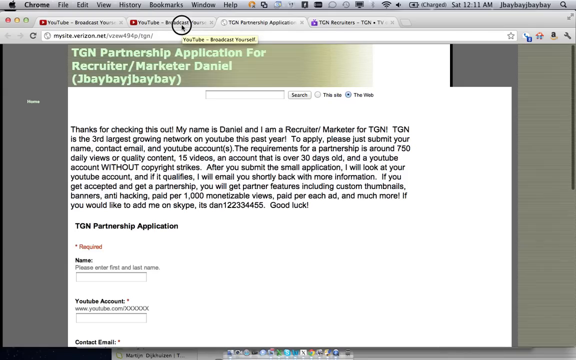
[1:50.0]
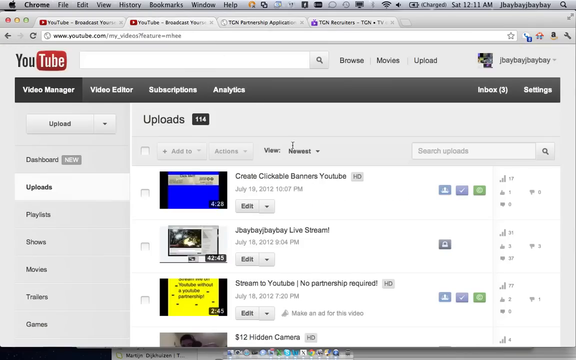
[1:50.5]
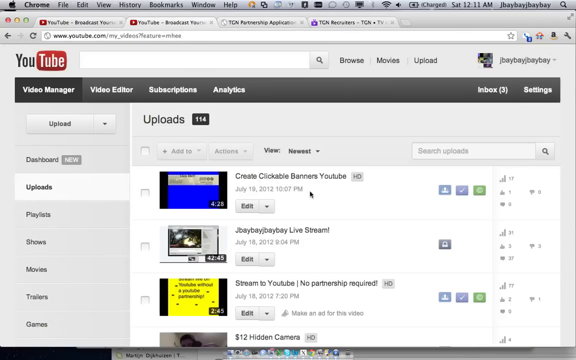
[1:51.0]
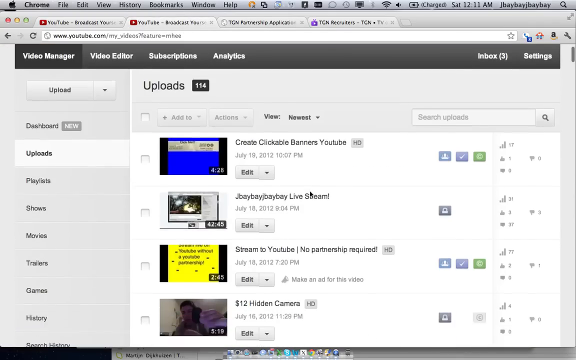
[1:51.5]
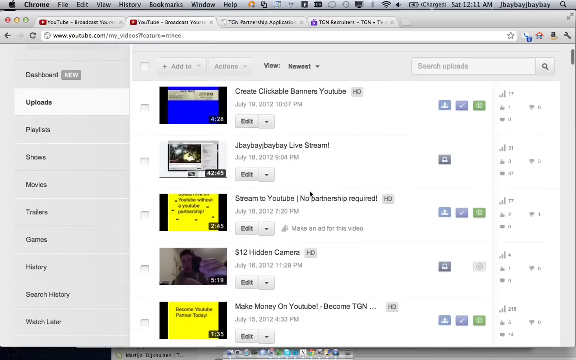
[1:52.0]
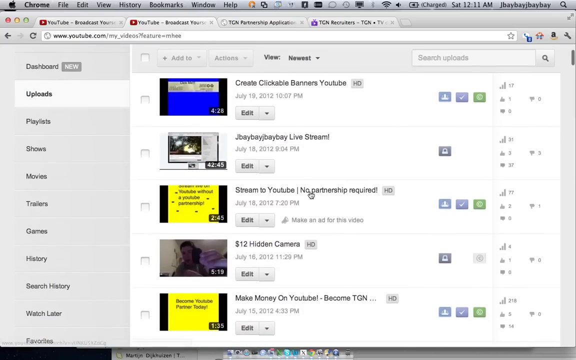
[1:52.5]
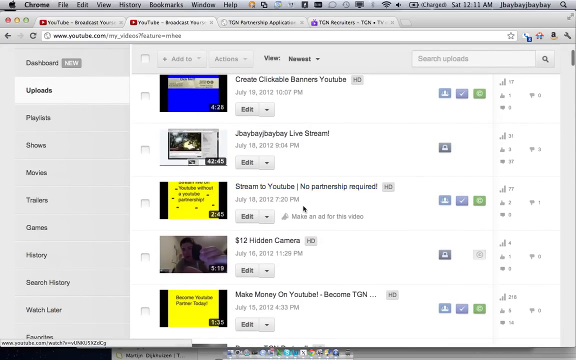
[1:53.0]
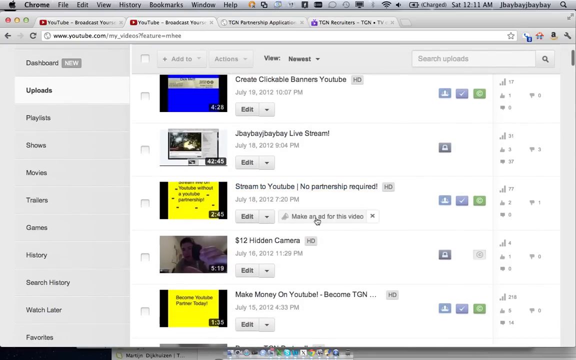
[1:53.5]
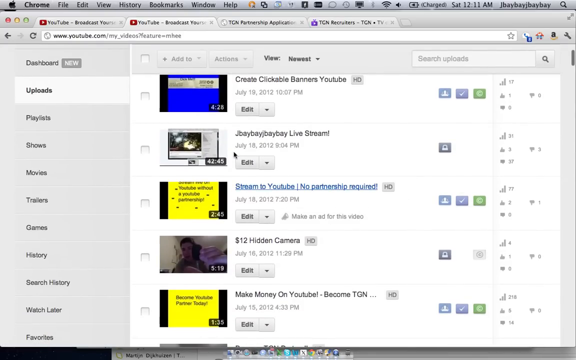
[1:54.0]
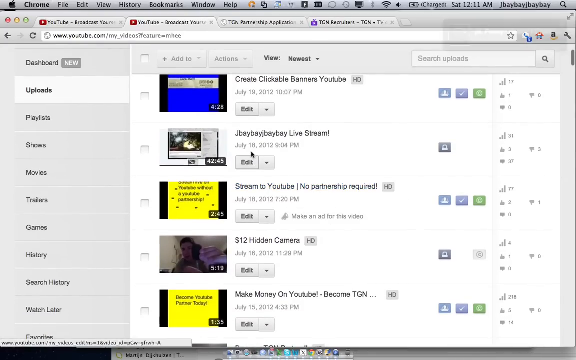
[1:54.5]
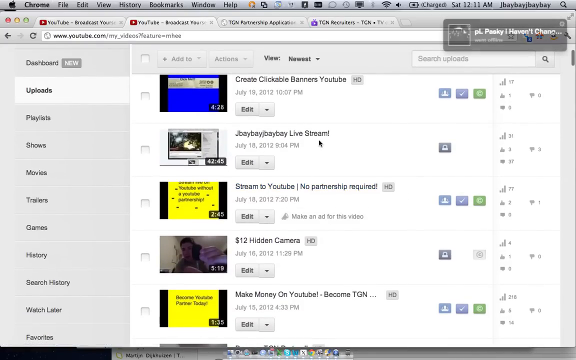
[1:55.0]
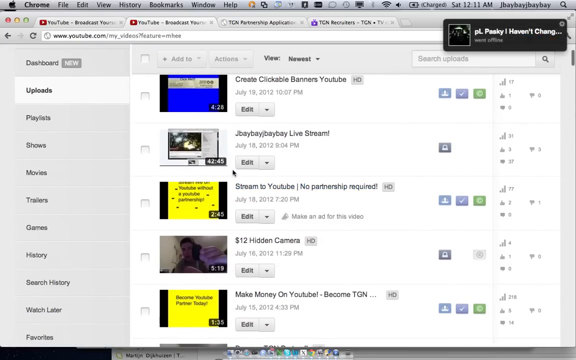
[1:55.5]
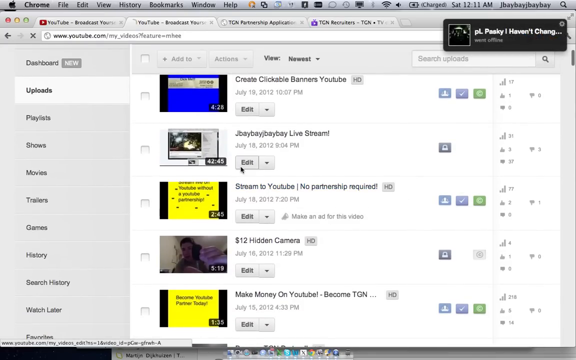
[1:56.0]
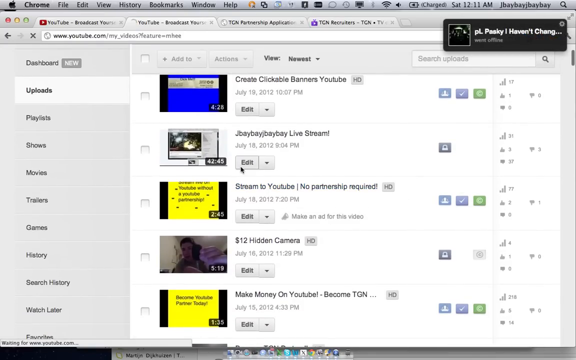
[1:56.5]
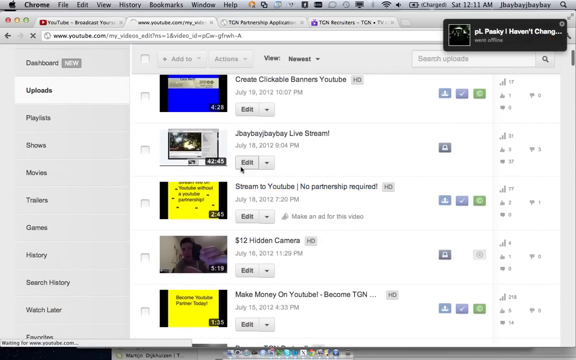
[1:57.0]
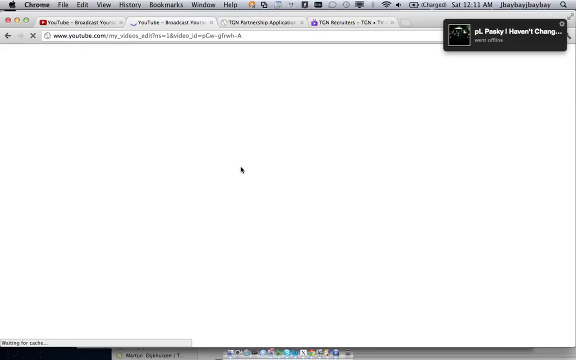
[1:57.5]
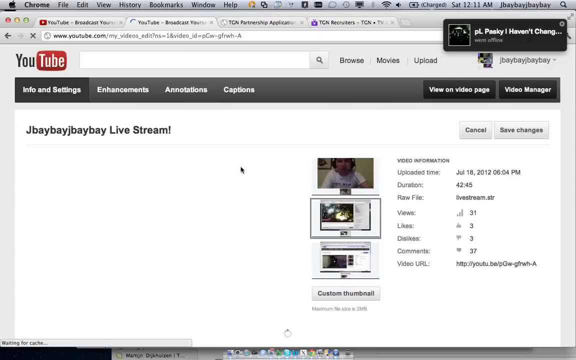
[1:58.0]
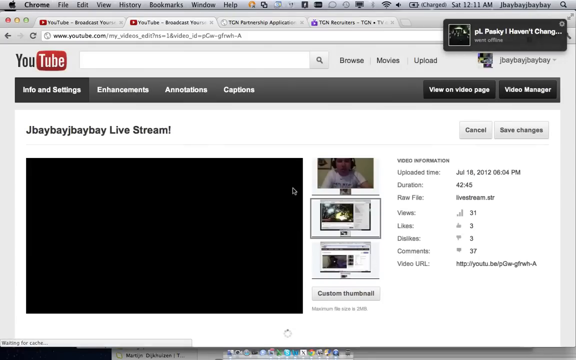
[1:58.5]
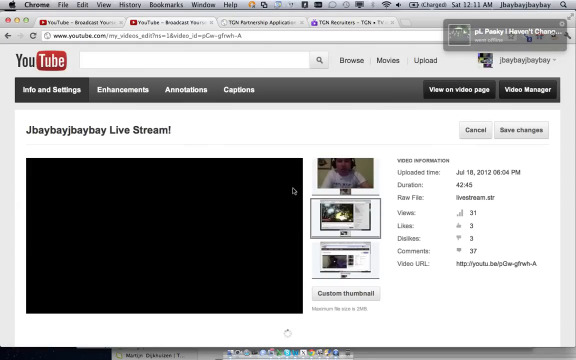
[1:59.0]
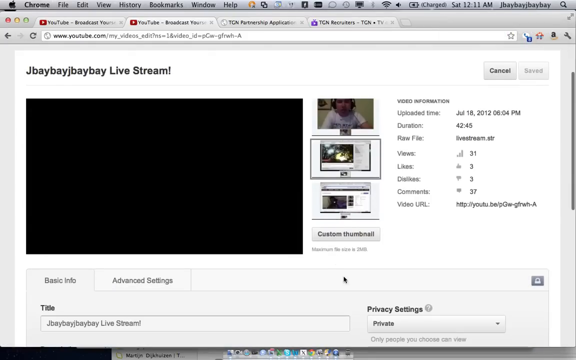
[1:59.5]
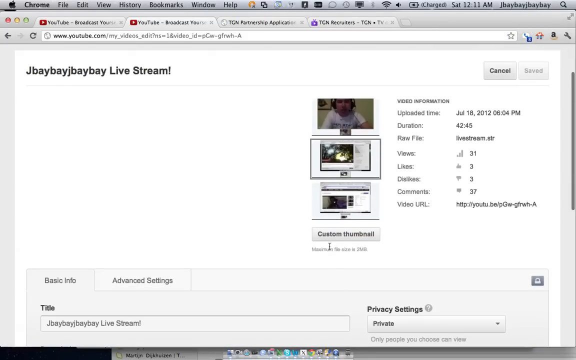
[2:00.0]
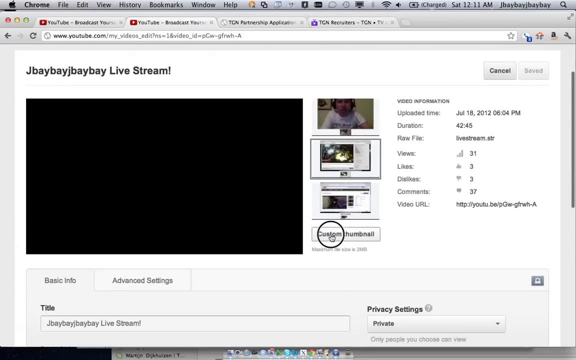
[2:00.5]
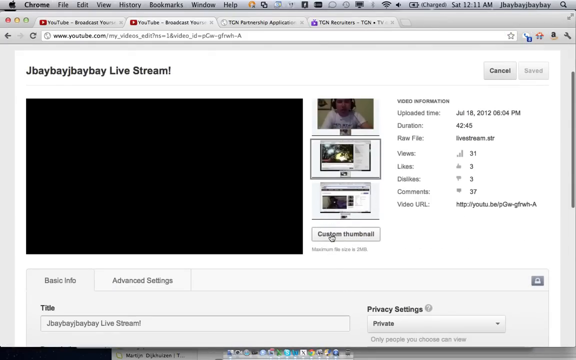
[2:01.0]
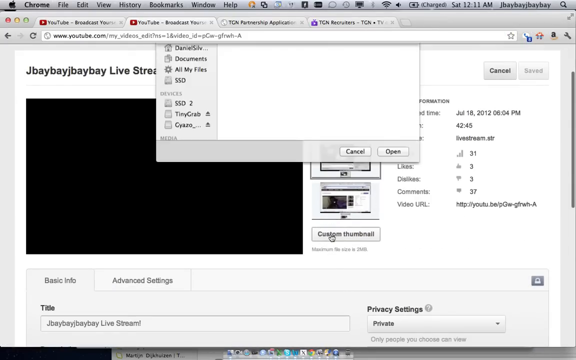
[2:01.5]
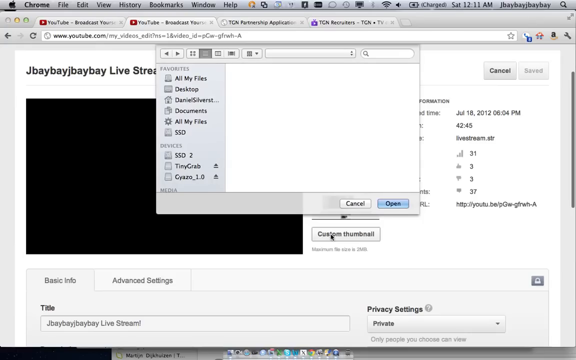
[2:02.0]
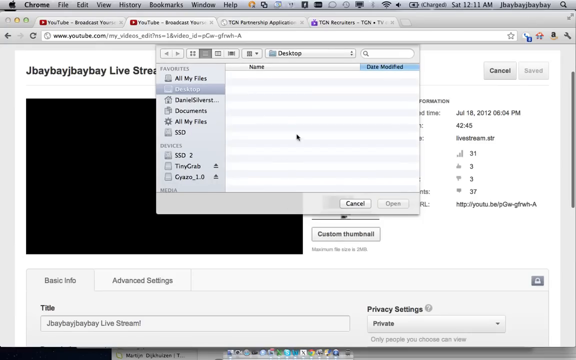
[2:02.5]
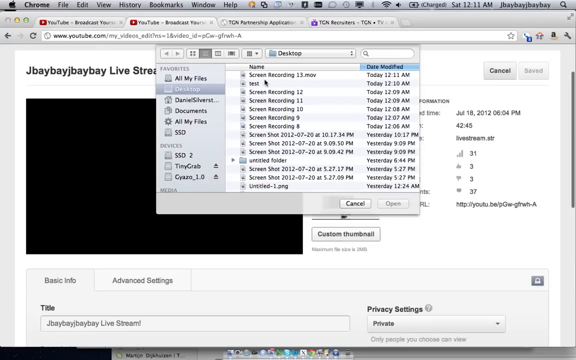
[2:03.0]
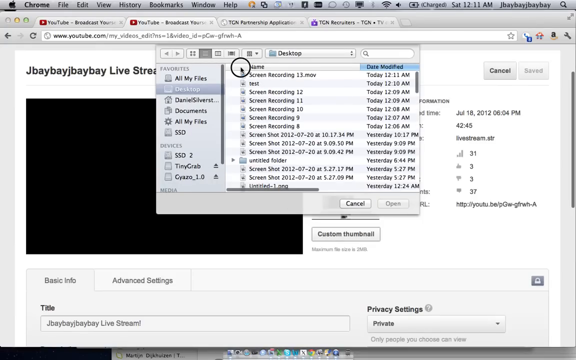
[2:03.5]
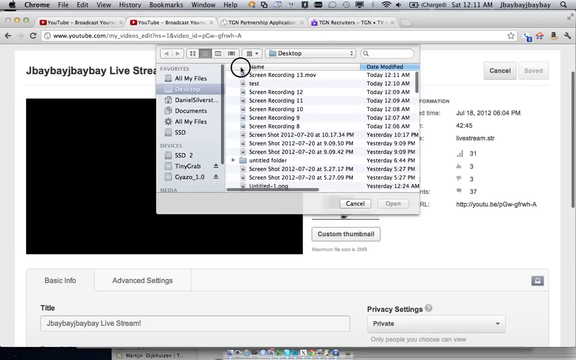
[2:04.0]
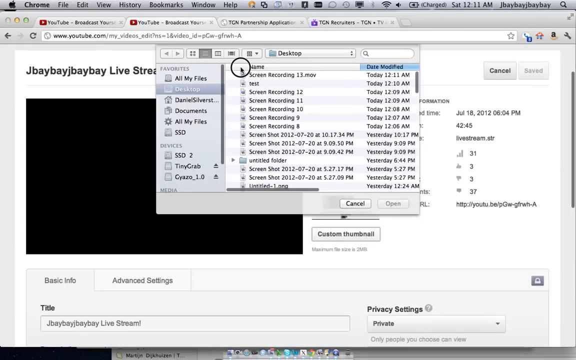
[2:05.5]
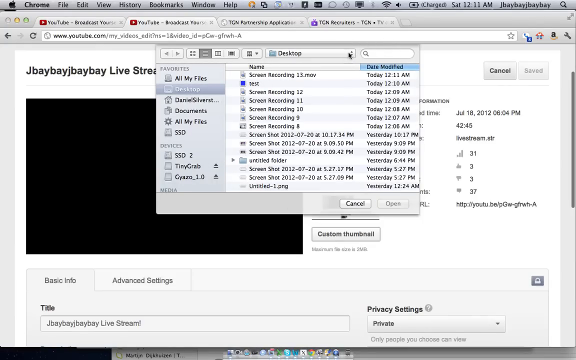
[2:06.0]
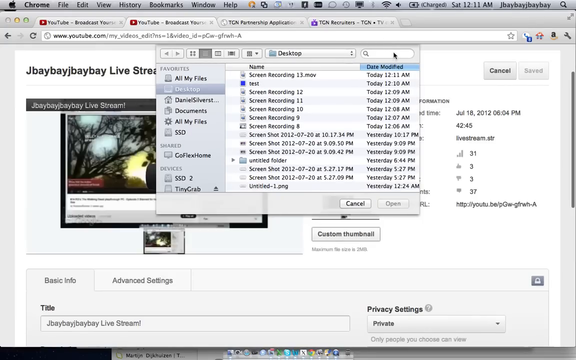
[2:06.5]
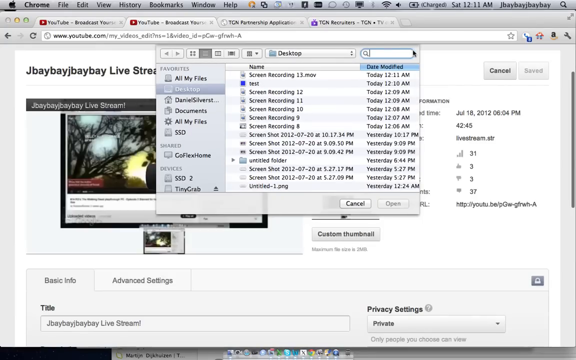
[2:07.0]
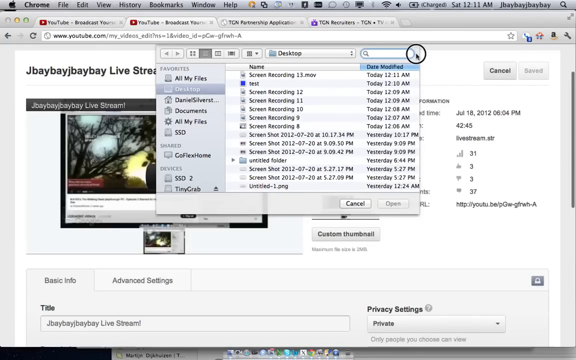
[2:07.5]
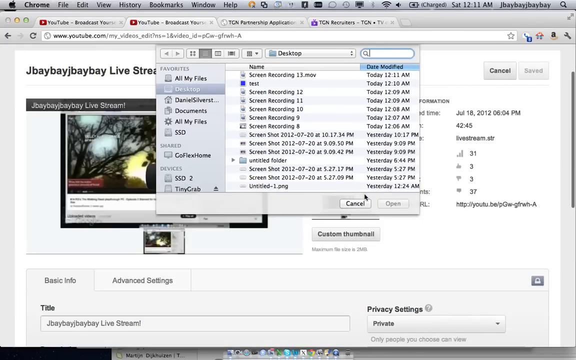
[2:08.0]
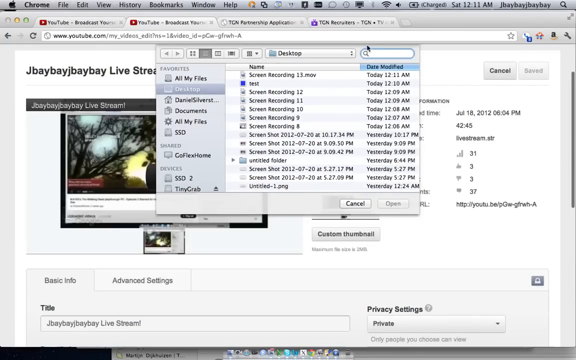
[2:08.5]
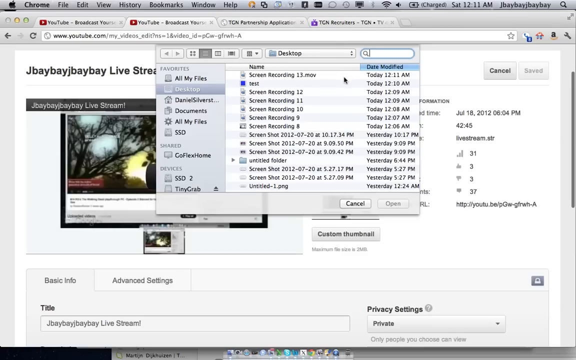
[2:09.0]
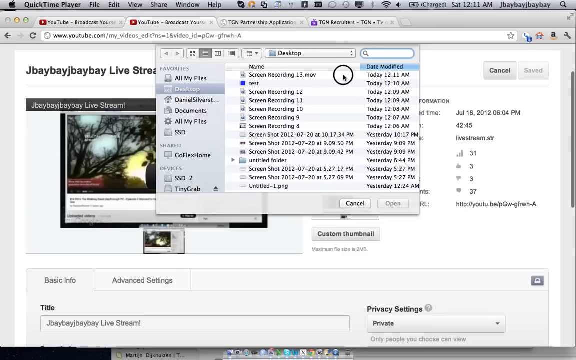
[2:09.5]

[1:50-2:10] The application page is shown, then YouTube, with a number of videos such as "create clickable banners" and the "Jbebe live stream", a recorded live stream from July 18th 2012, a video marked "no partnership required" from July 2012, and "$12 hidden camera" from July 16 2012; these are probably videos the account has created. The live stream is selected and its custom thumbnail is edited. A file folder on the desktop is open, showing a number of recordings, screen recordings and screenshots with various modified dates. The view then looks through a number of videos with items such as uploads, playlists, shows, movies, trailers, games, history, search history, watch later and favorites, including a live stream video the account has created.